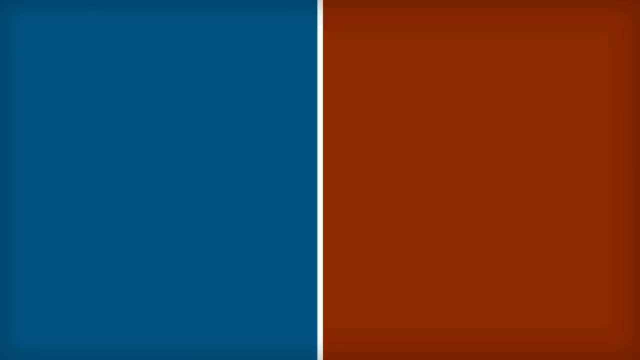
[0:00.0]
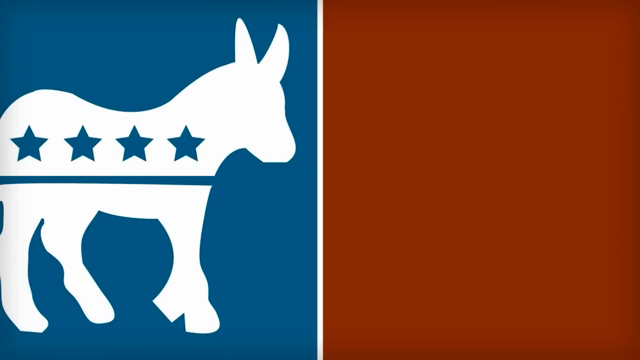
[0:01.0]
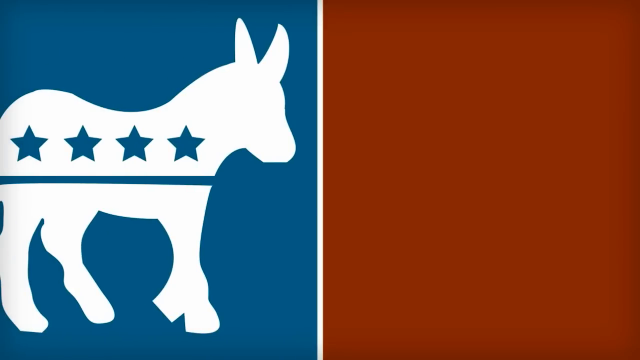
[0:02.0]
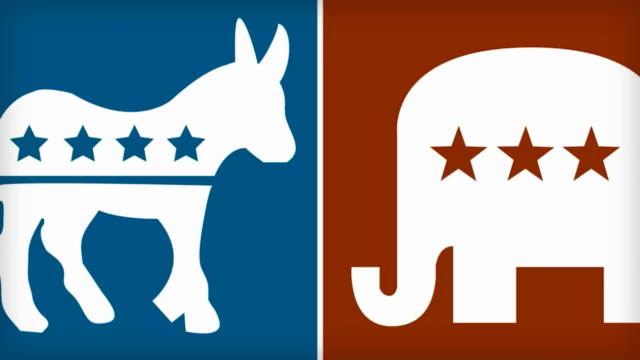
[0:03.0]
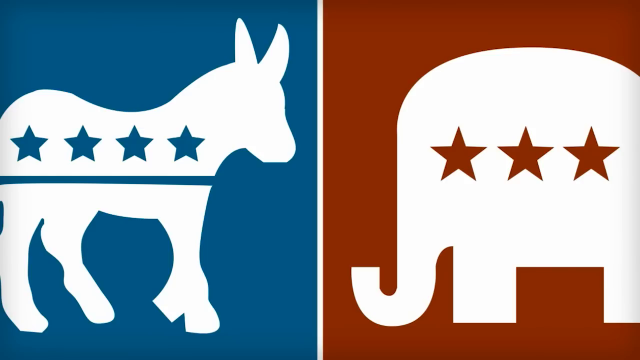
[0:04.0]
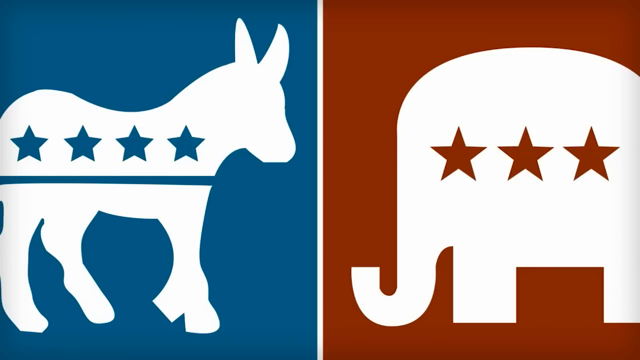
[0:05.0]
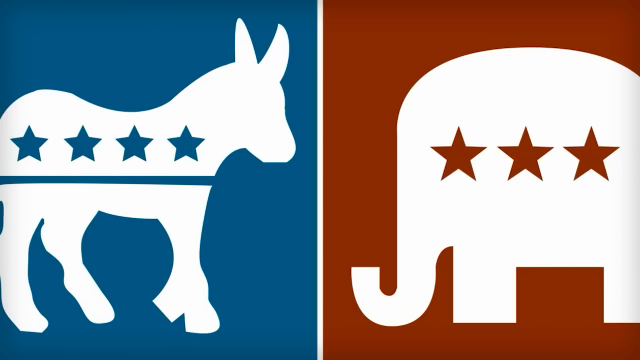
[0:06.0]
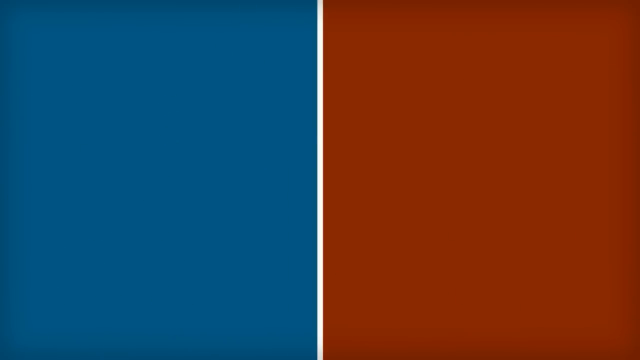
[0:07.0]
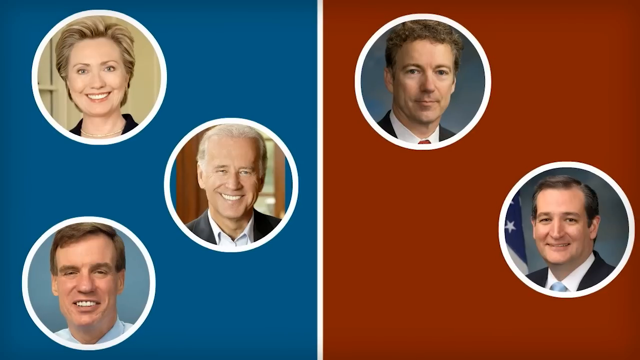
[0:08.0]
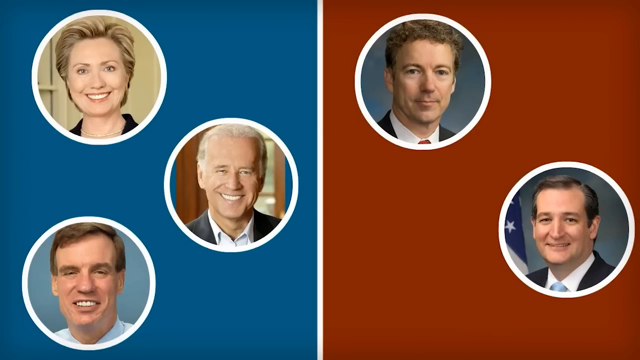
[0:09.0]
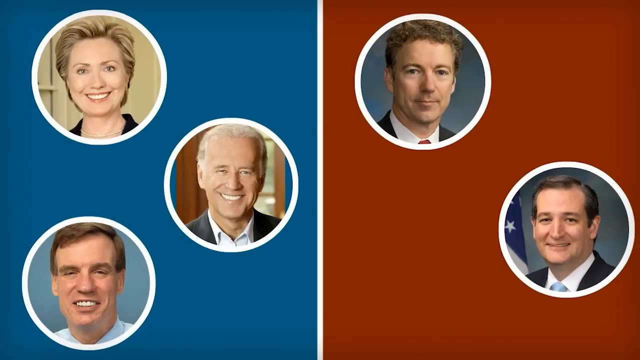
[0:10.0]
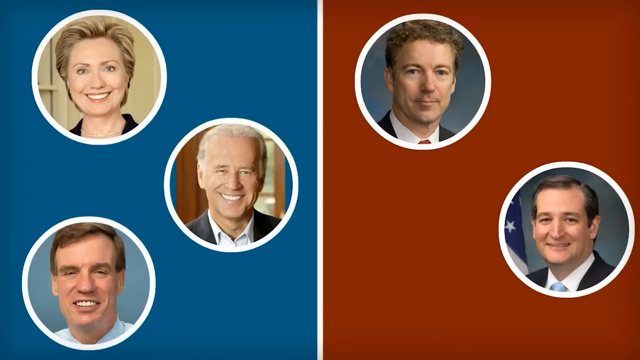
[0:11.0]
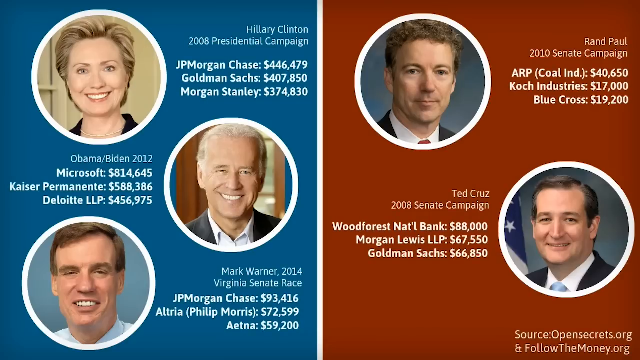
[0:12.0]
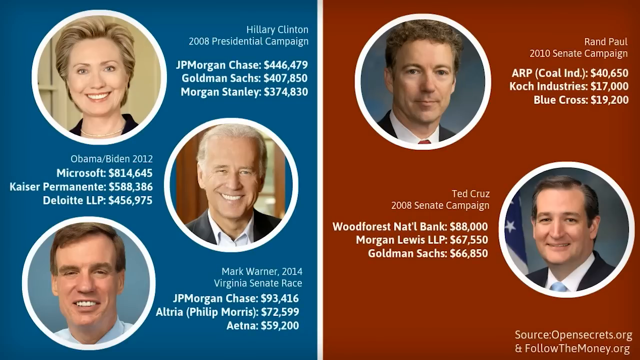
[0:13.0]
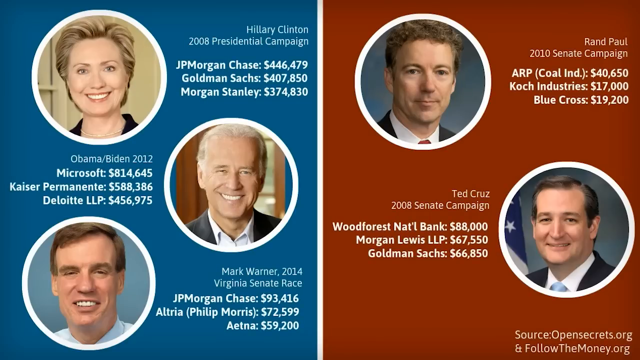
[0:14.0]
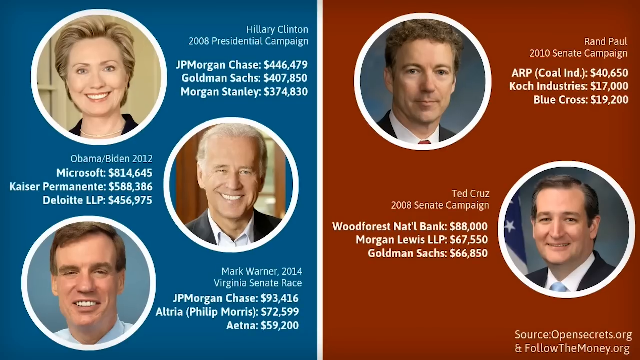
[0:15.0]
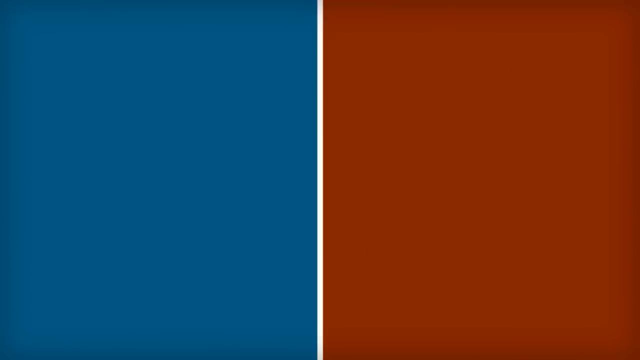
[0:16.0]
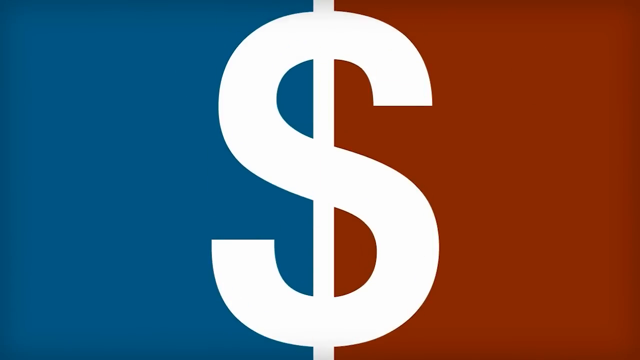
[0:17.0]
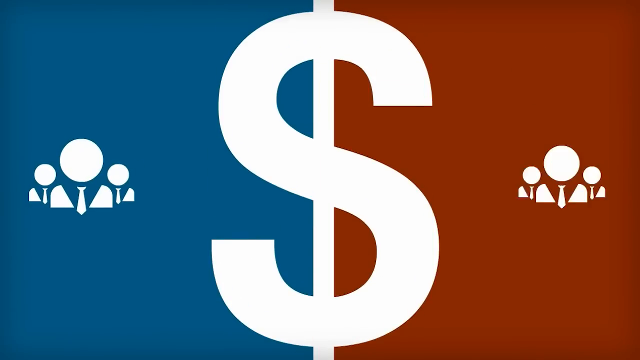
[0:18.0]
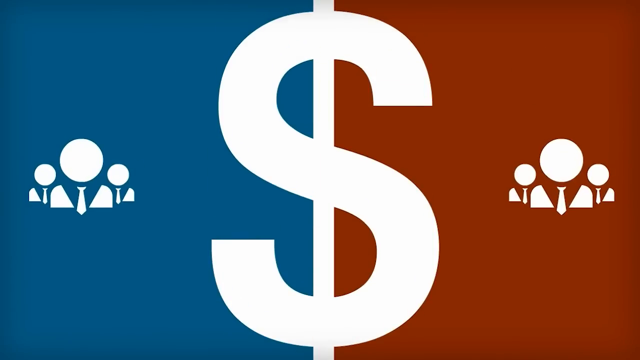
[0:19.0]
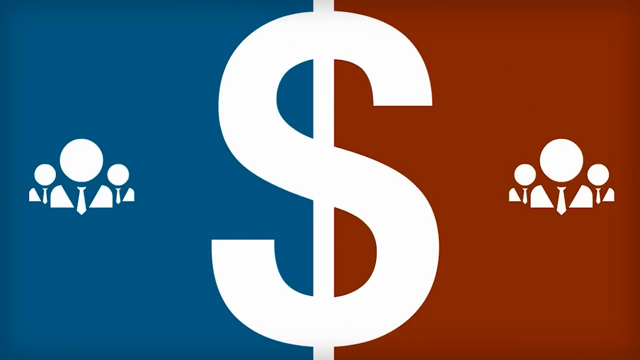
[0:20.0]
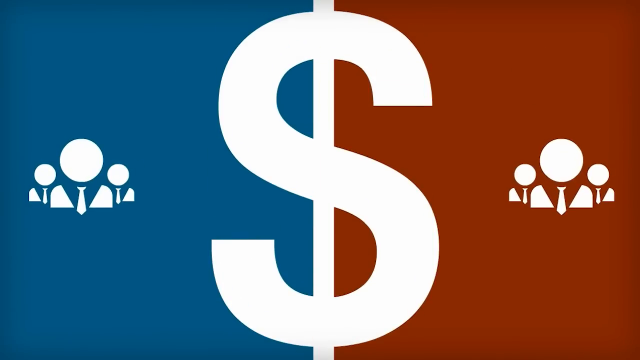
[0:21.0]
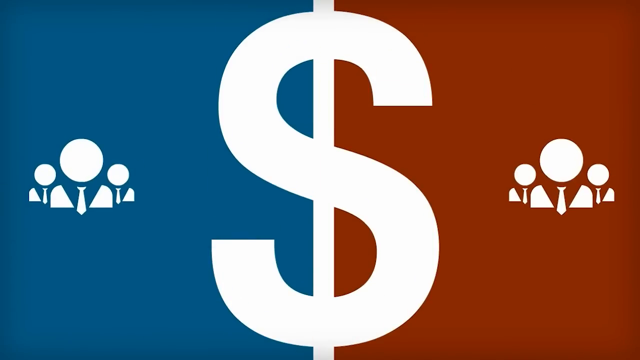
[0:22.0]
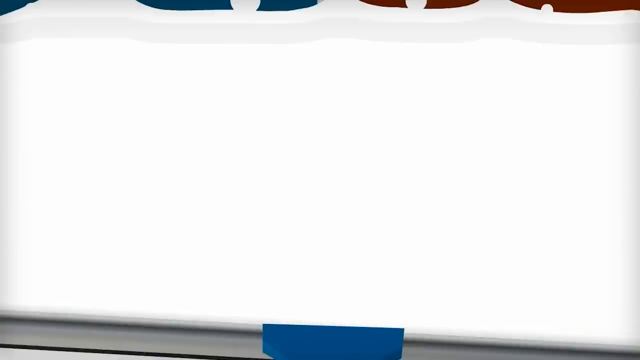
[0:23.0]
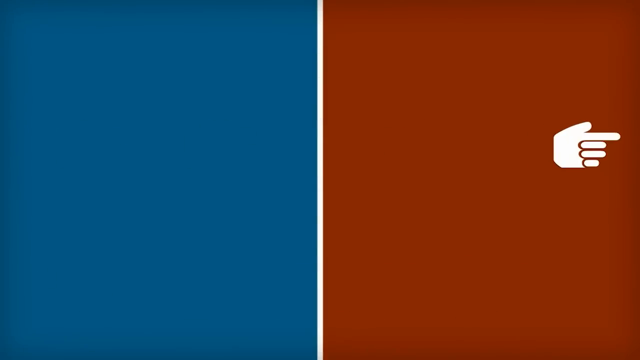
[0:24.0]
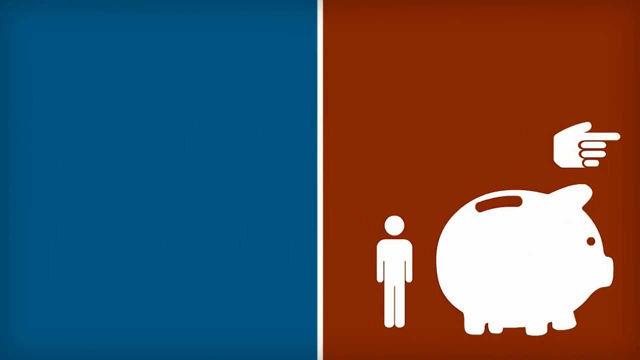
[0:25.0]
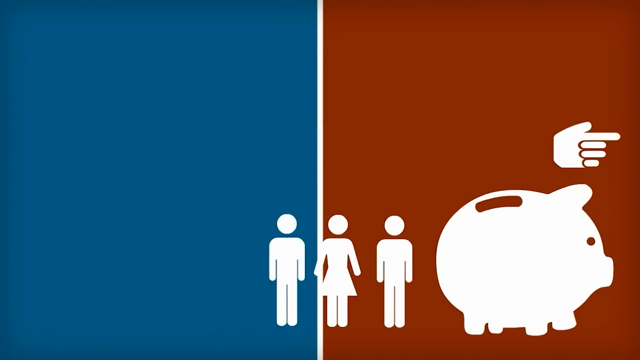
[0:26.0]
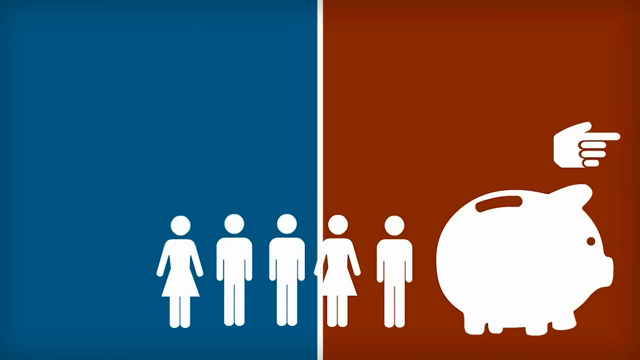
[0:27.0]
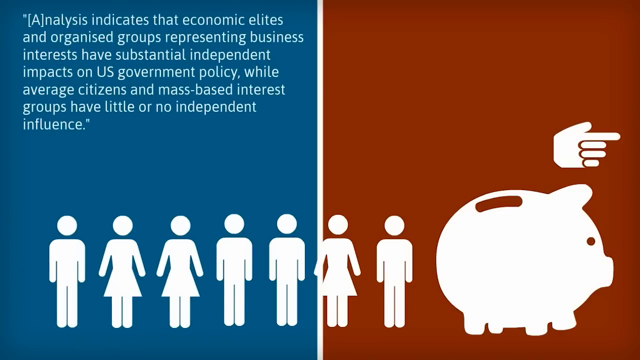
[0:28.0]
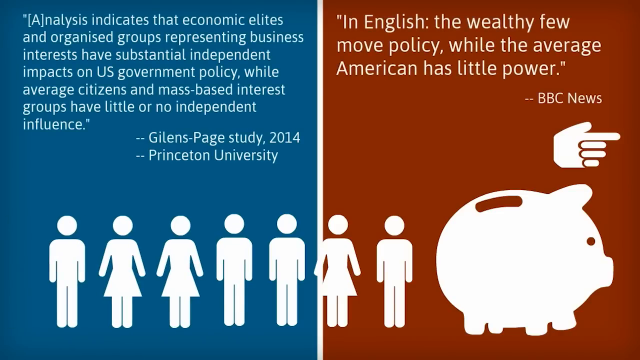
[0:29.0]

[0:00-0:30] An elephant and a donkey appear, each with five stars, along with the Democratic side and the Republicans, and money is shown on the other side. Texas is shown. It appears to be a campaign for registering and voting in America, and people seem to be holding phones. Different people appear on the screen, with text naming Microsoft and other American brands. Next, America is shown, then a piggy bank, then American people walking in the piggy bank, and then the word "analysis" appears. People are shown talking, followed by a lot of writing. The screen then turns red and blue with a white line in the middle, and a shower-like thing comes down and clears away the writing.